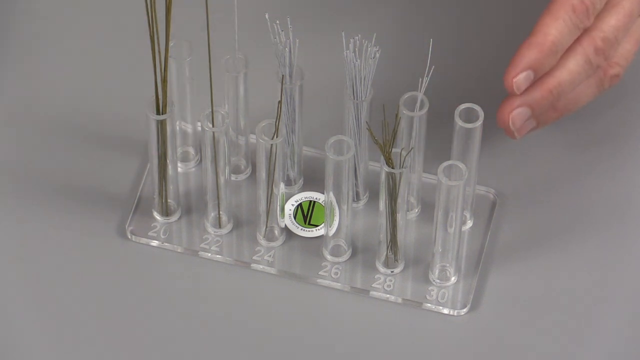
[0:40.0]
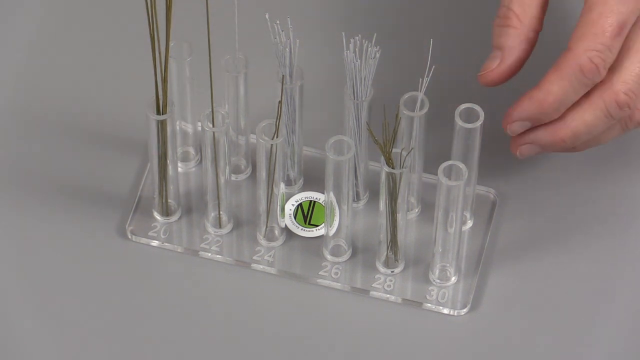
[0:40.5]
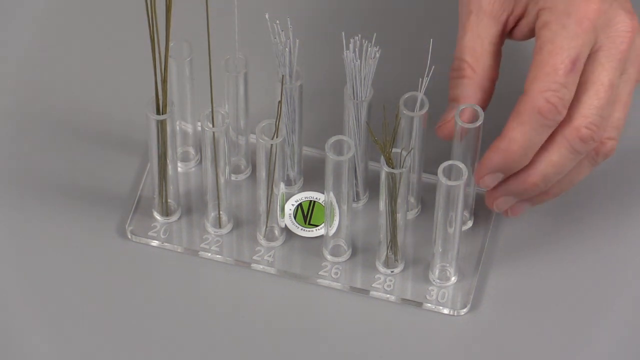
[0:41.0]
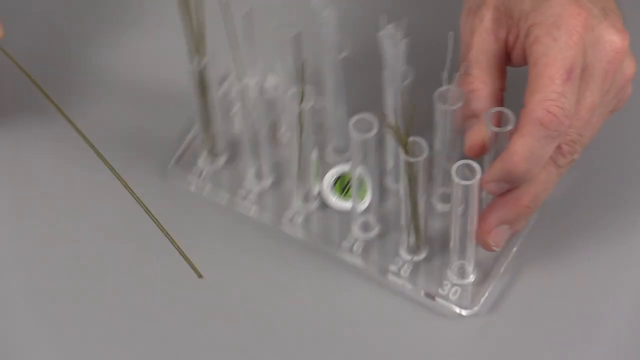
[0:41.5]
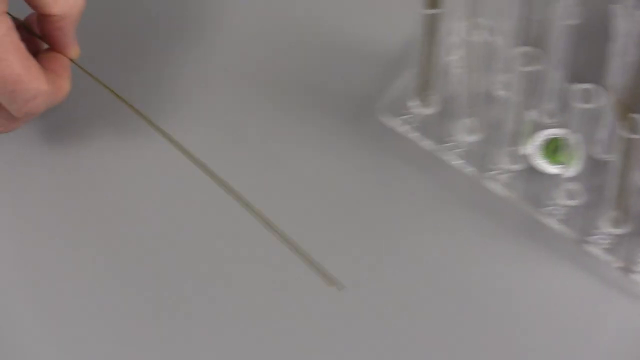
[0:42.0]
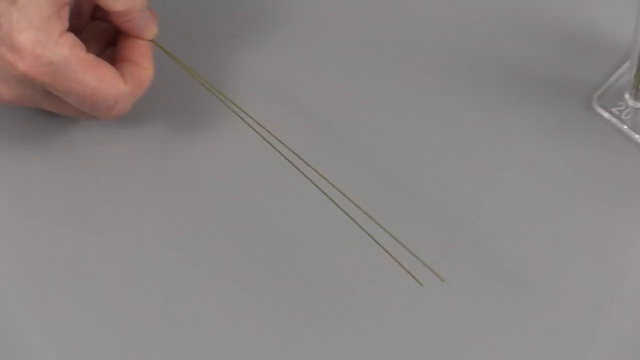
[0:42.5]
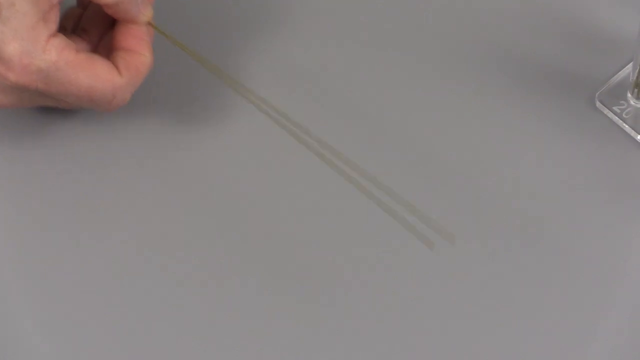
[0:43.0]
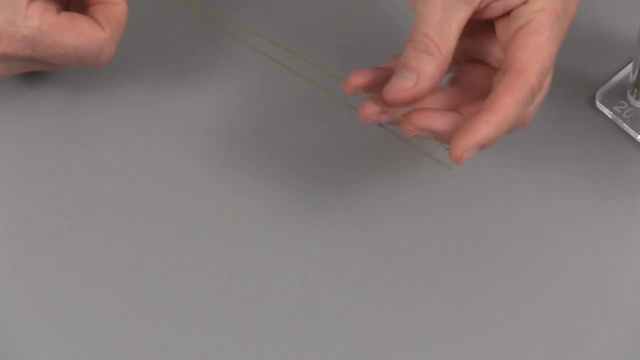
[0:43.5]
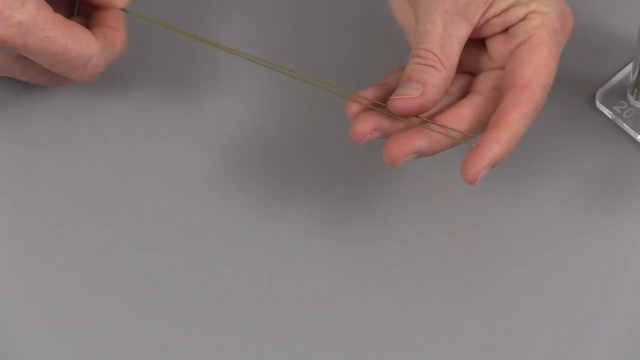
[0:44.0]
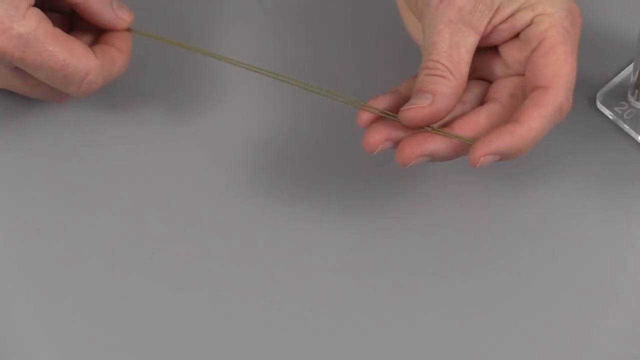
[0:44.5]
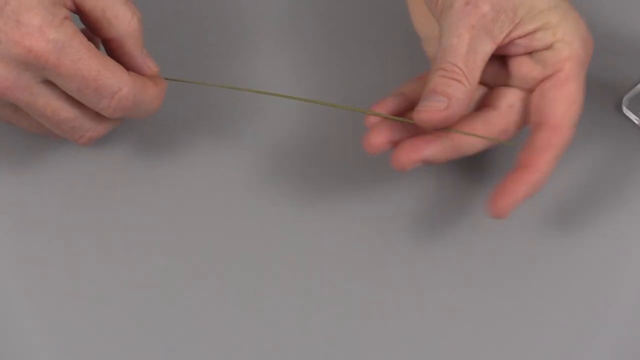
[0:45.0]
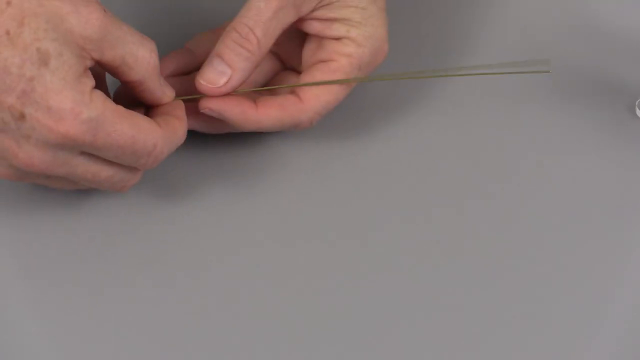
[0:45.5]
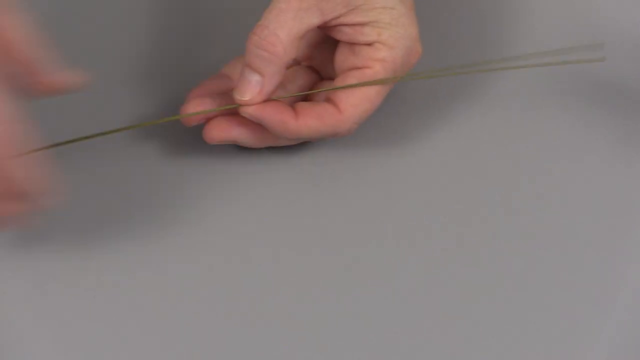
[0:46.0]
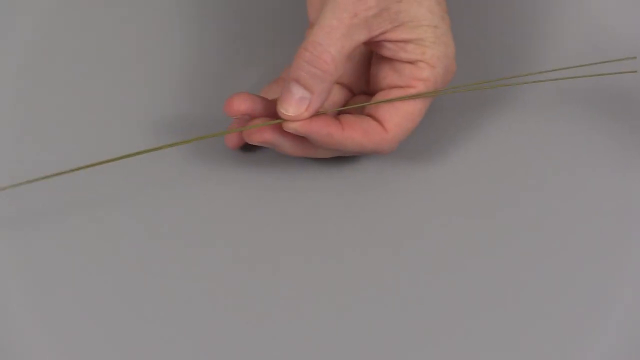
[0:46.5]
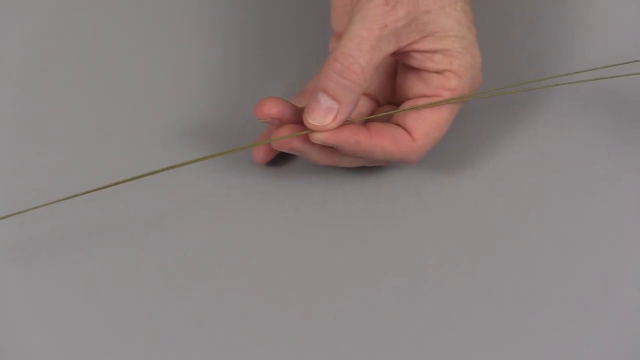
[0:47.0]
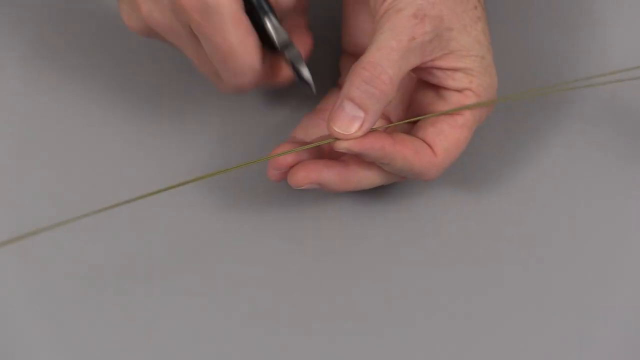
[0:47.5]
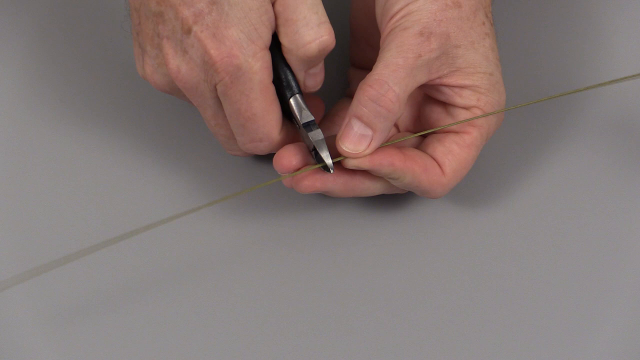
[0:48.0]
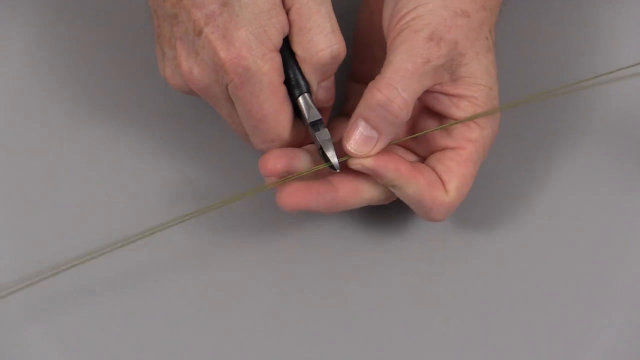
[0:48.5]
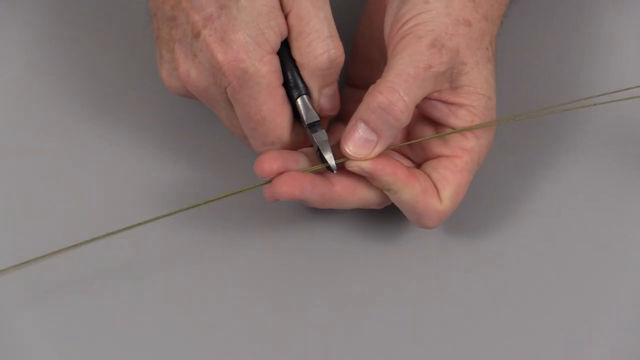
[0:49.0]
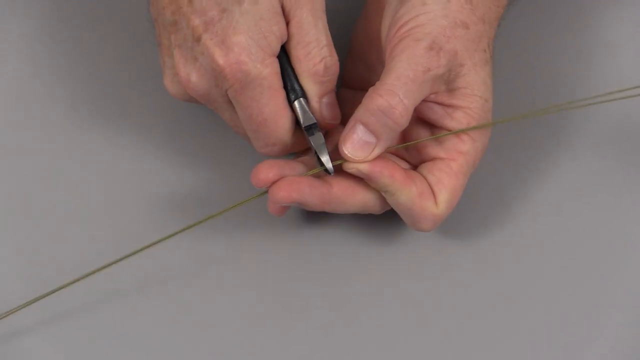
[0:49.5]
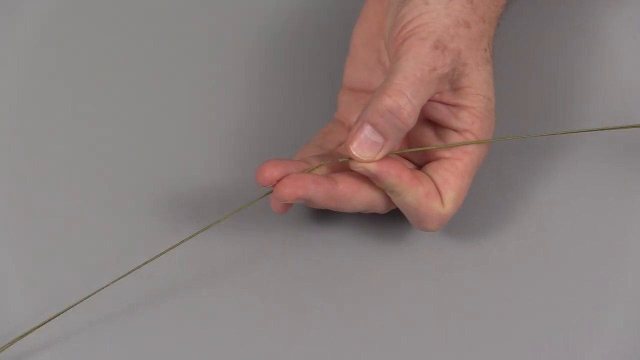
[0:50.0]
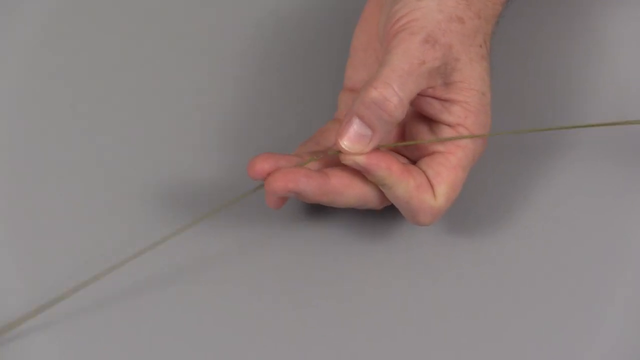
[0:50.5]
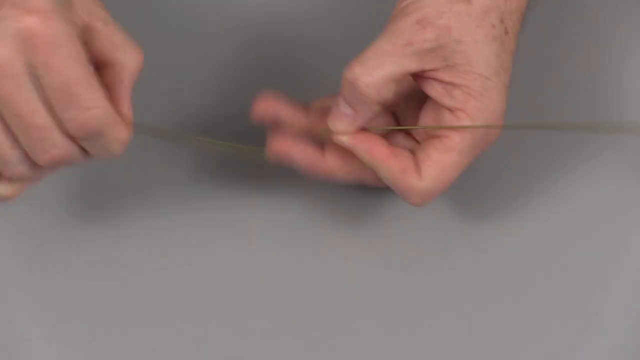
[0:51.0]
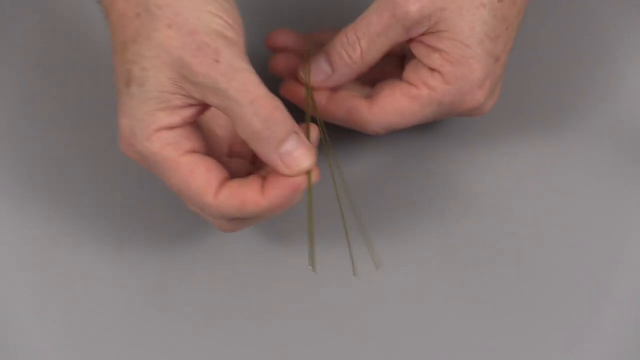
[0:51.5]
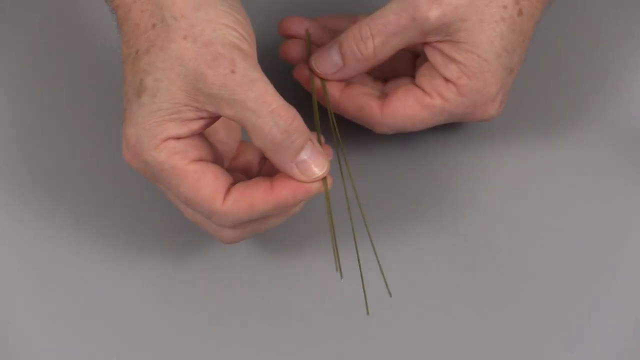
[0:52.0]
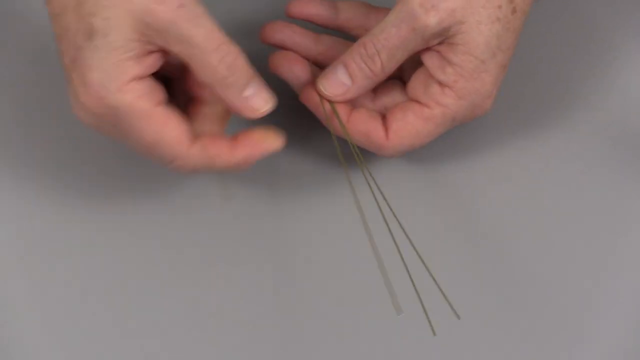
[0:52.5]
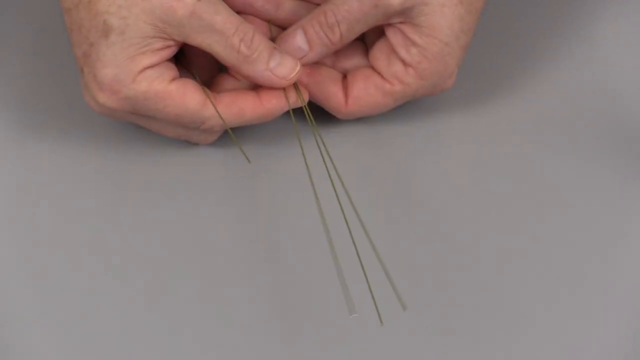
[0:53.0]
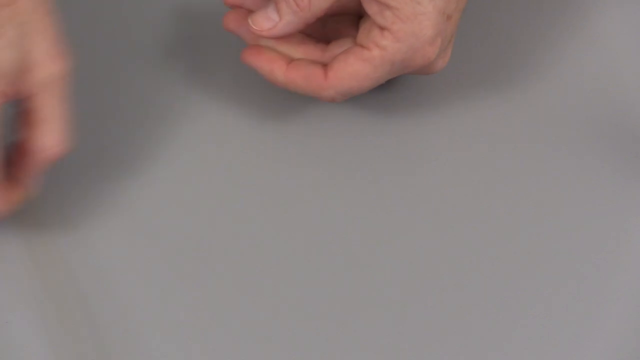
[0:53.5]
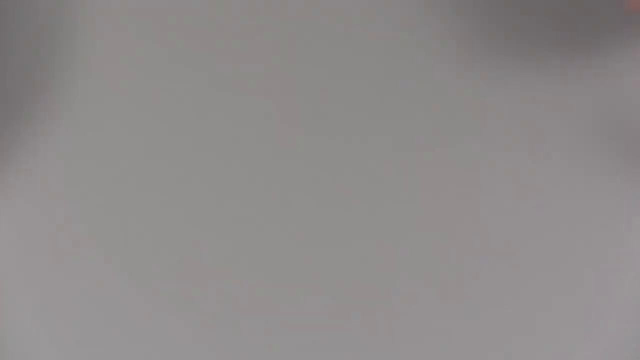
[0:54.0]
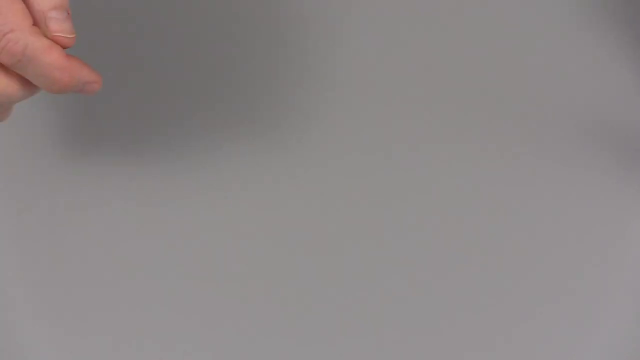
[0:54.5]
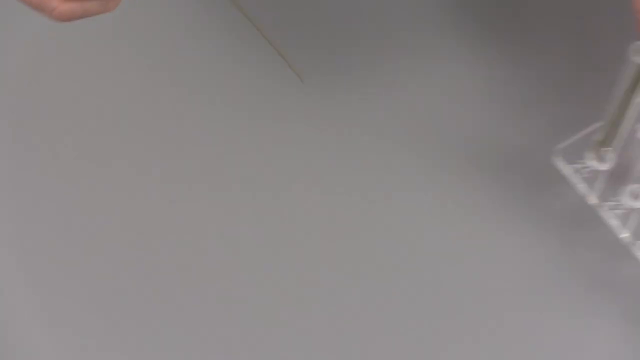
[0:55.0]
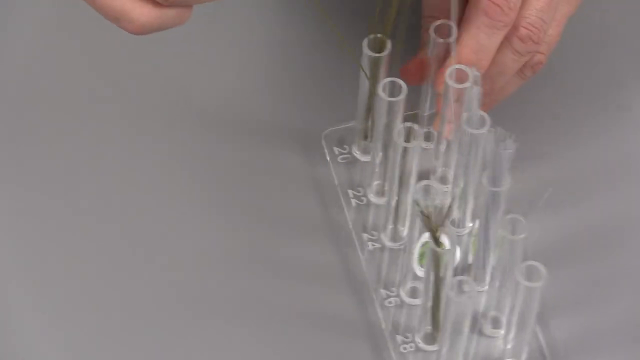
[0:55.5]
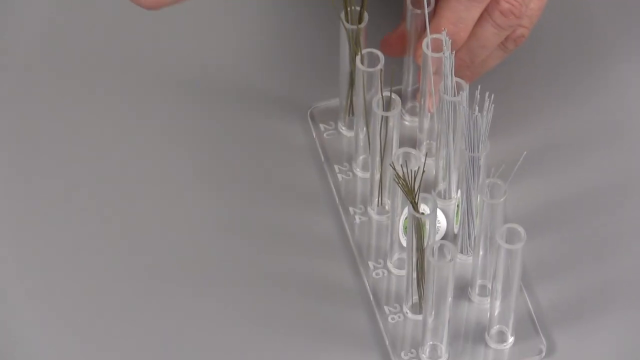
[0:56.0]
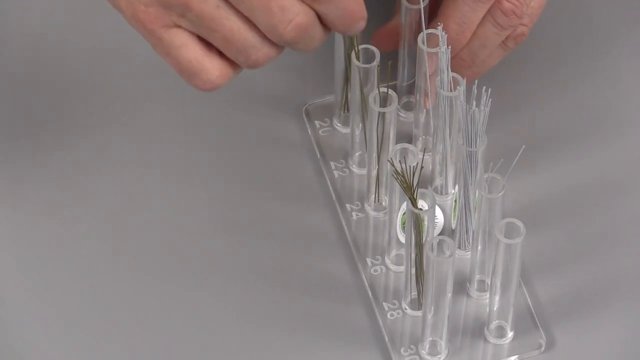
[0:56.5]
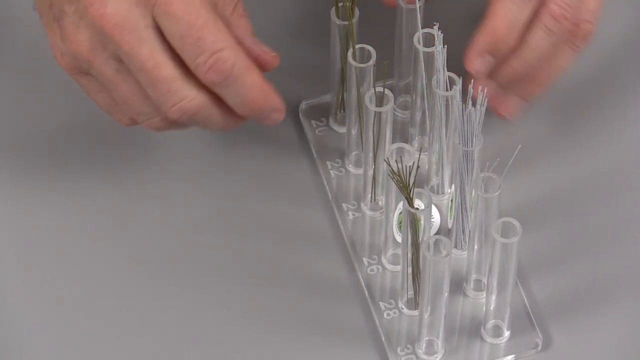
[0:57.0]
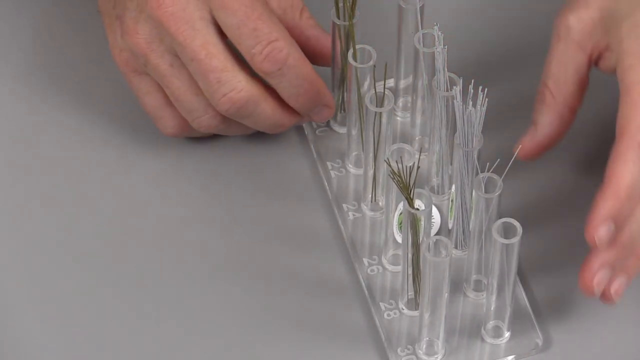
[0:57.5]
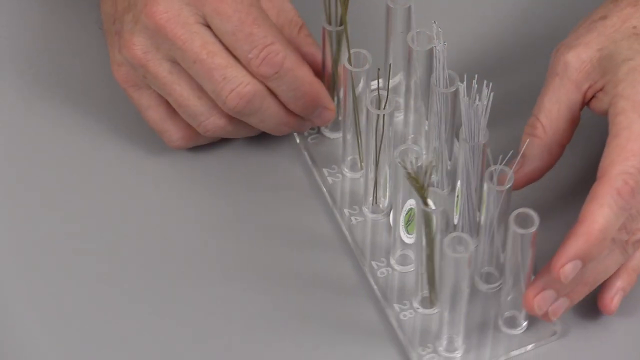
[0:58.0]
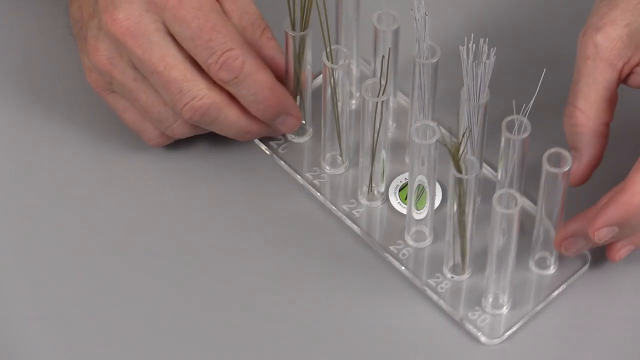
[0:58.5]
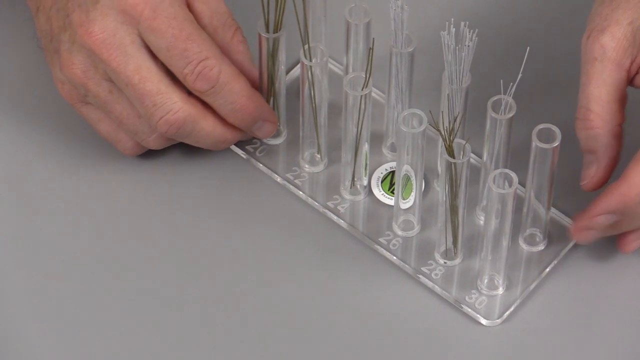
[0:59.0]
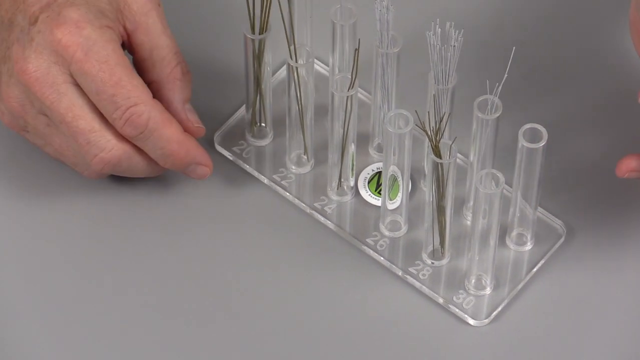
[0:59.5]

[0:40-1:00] The hands shift the batch of vials, and between the fingers appear cables or small metallic strands. Two strands are held in the left hand while the other hand holds a plier, and the hands cut both strands so that there are four. The hands pull back the batch of vials and put the strands inside one of the vials. Of the 12 vials, seven already have strands inside and some do not have strands yet.